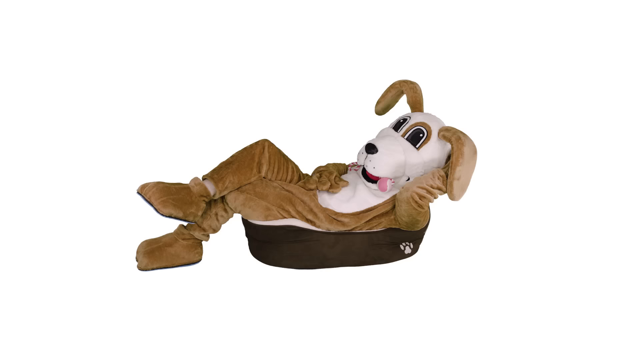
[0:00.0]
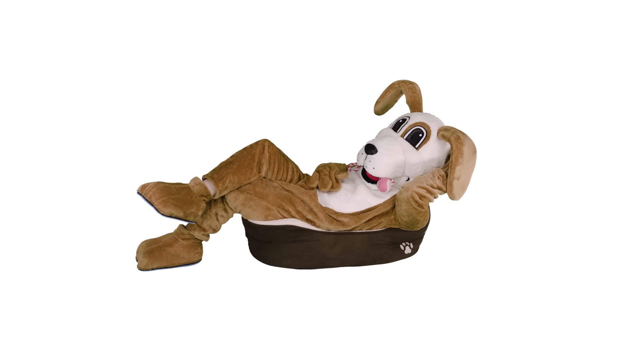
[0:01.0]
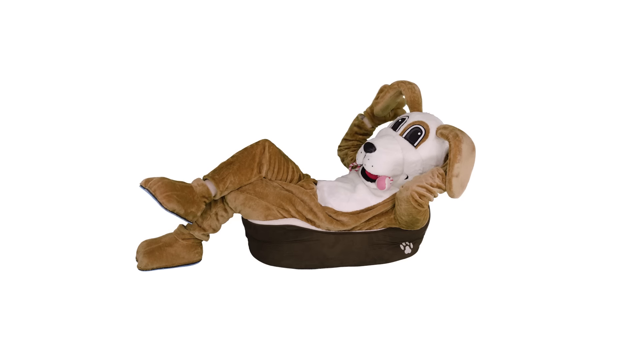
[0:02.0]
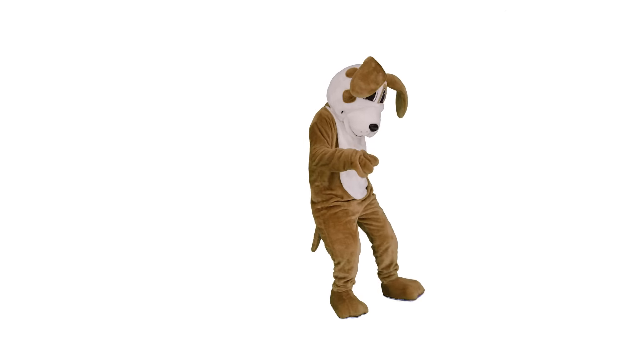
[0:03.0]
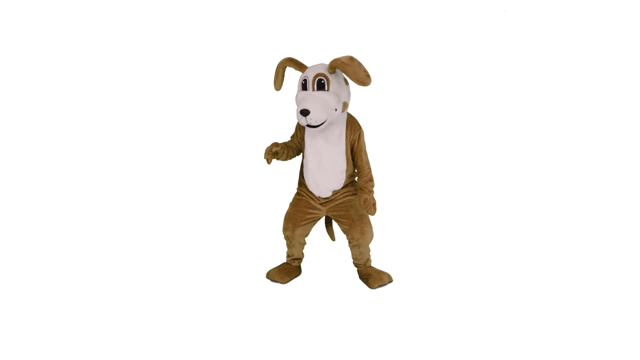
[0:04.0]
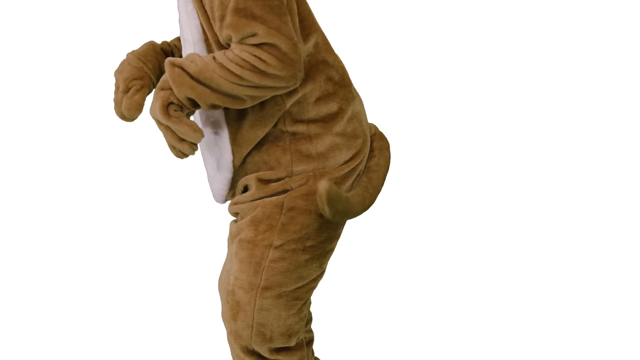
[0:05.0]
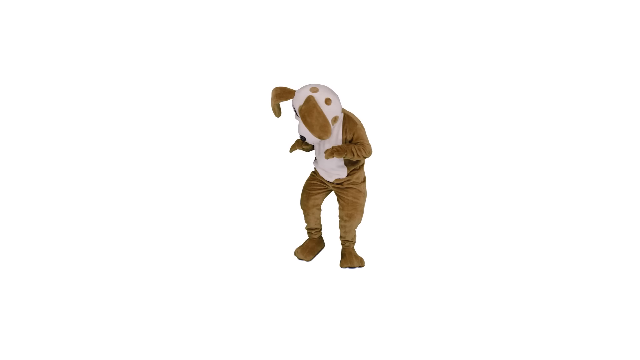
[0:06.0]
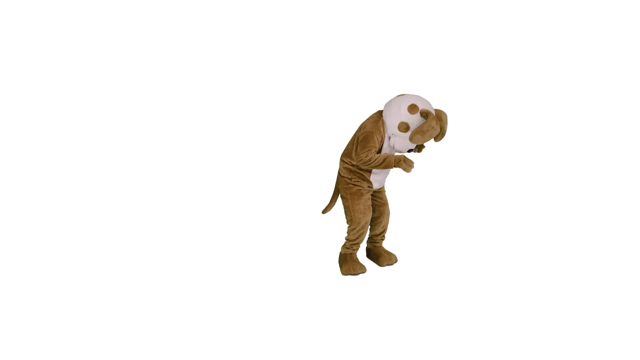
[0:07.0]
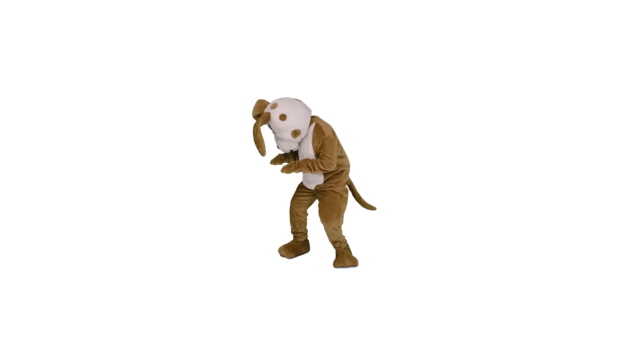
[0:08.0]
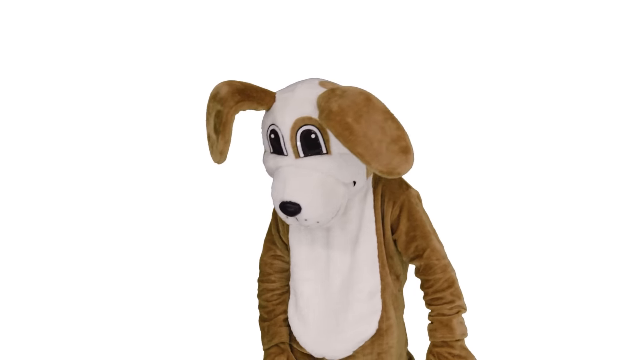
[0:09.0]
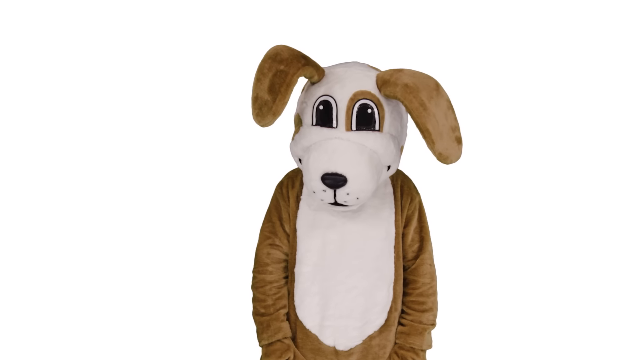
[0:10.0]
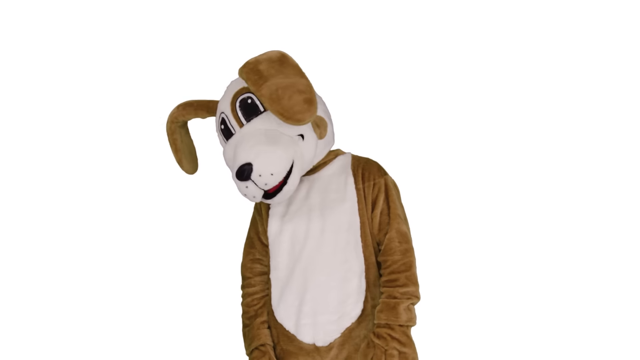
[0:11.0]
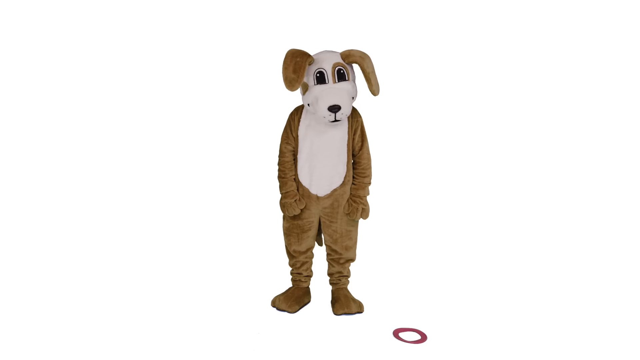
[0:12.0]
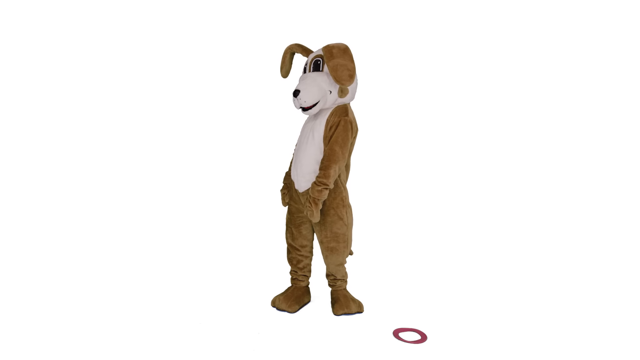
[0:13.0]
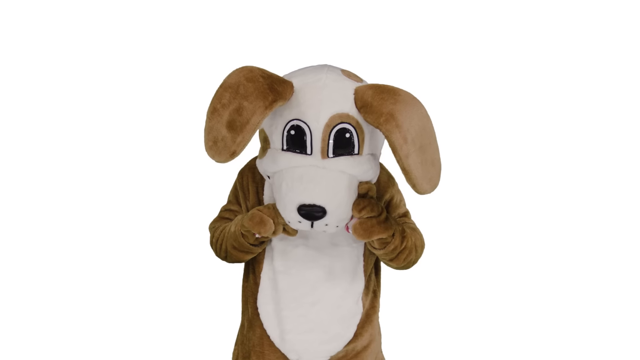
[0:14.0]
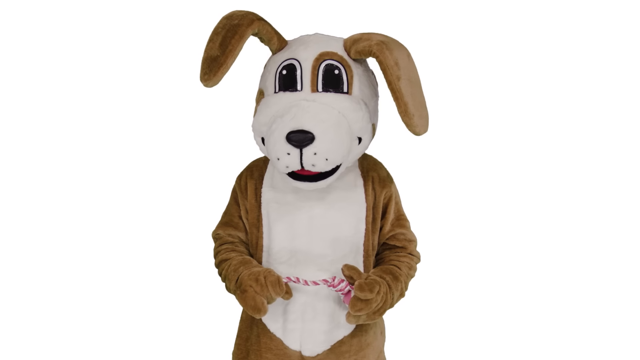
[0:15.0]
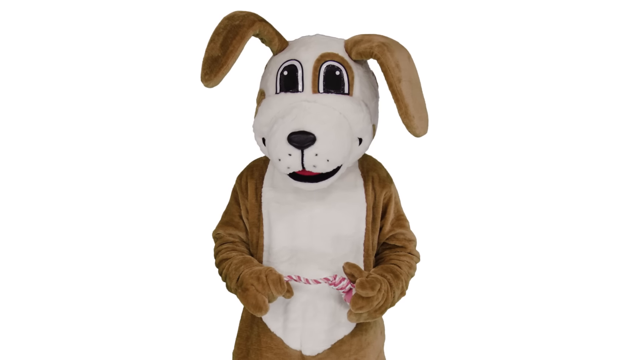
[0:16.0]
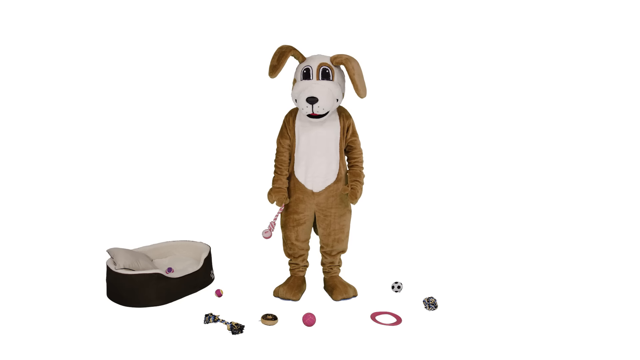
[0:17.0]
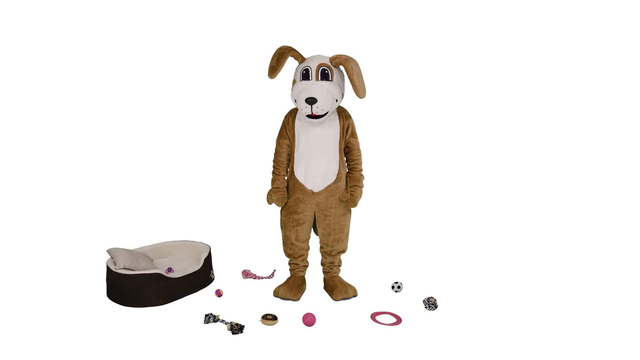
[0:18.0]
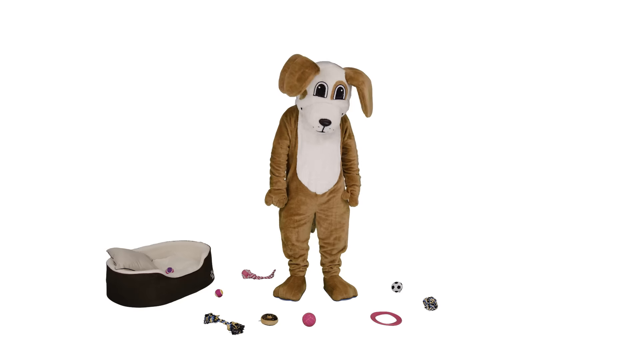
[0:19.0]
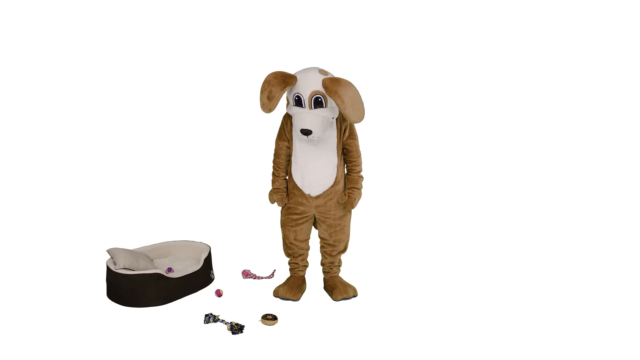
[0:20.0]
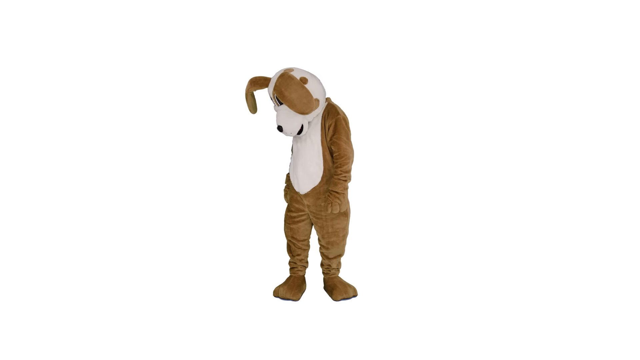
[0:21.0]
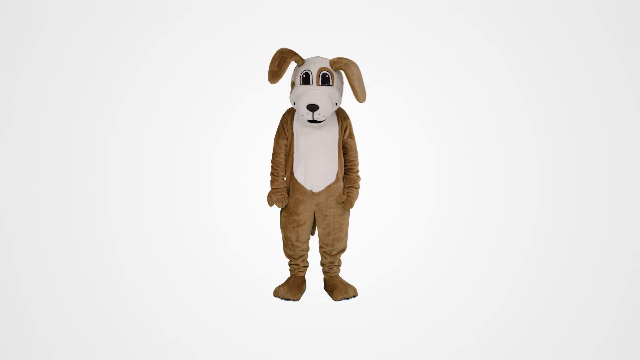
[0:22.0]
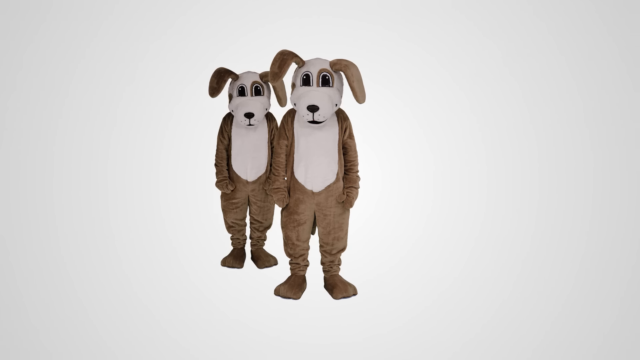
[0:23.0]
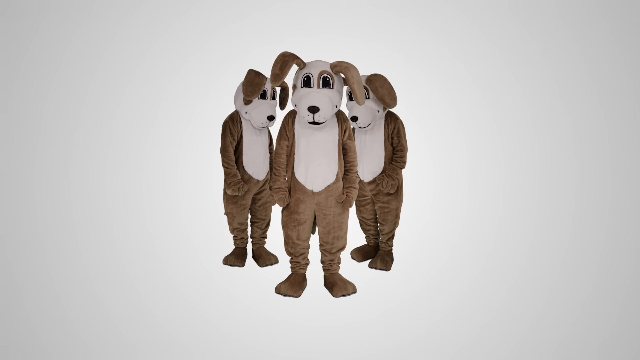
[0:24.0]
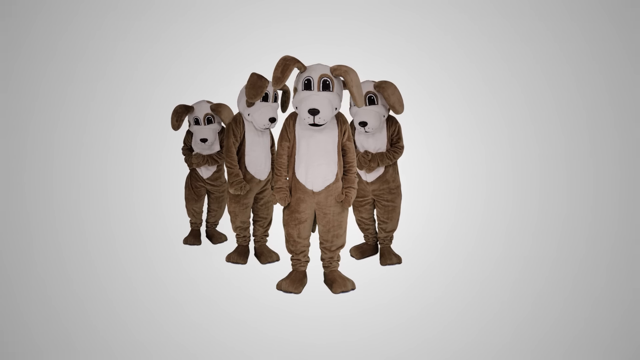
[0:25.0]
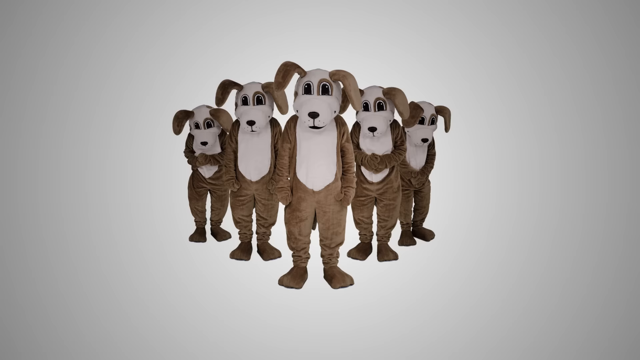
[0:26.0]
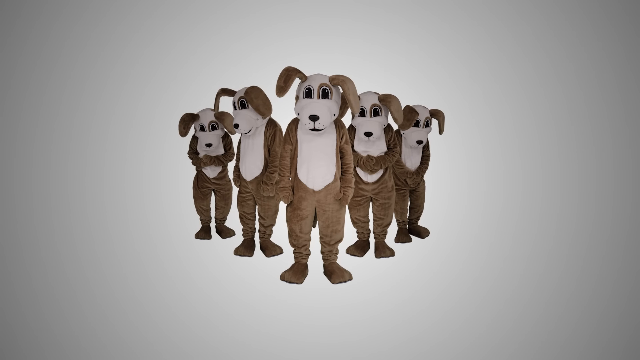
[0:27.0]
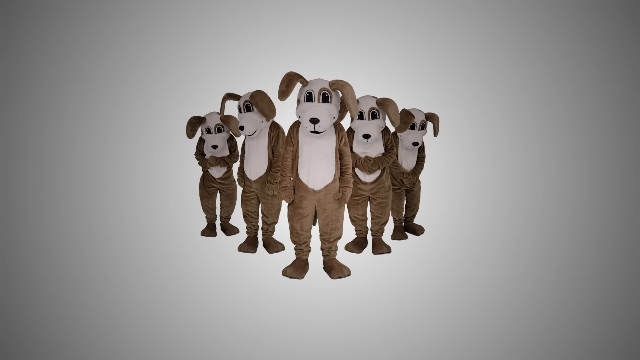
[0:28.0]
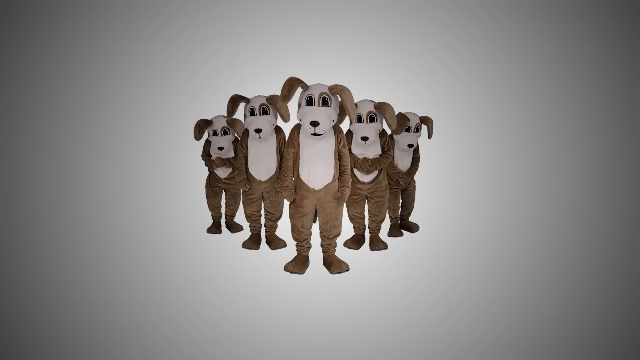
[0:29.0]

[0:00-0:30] A person is dressed like a puppy in a brown costume, with the head and chest in white and long brown ears. They lie on a dog bed, tapping their tummy and wiggling their leg. The person then gets up, wiggles their tail and runs around. The head of the costume has brown dots on it. Someone throws a ball at them and they follow the ball with their head. Someone throws a pink frisbee at their face, and they make funny faces. They hold a white and purple string and put it down on the ground. Their toys are shown: a frisbee, a ball, a donut, and quite a few balls, about five, on the ground. All the toys disappear, and then there are five people wearing the brown costume.